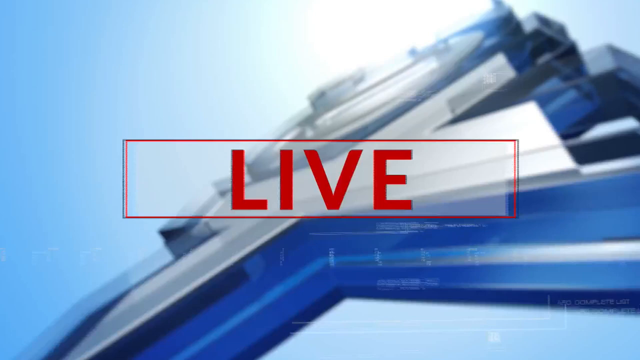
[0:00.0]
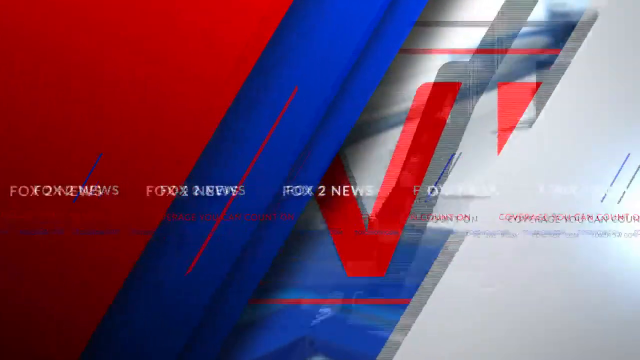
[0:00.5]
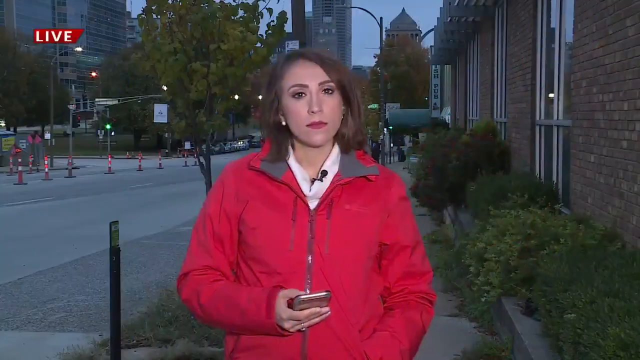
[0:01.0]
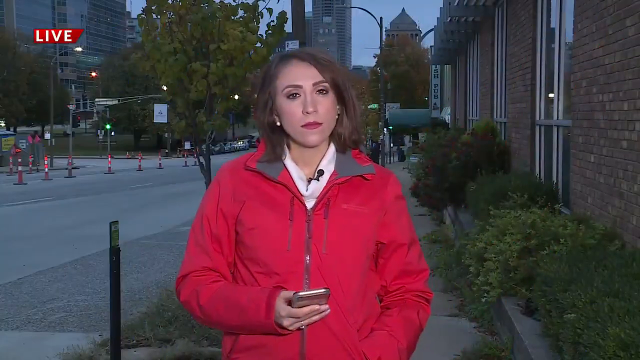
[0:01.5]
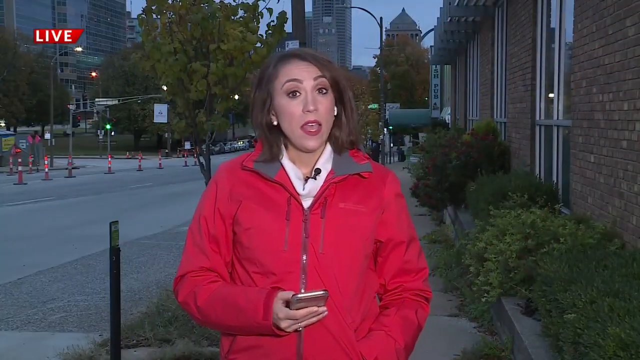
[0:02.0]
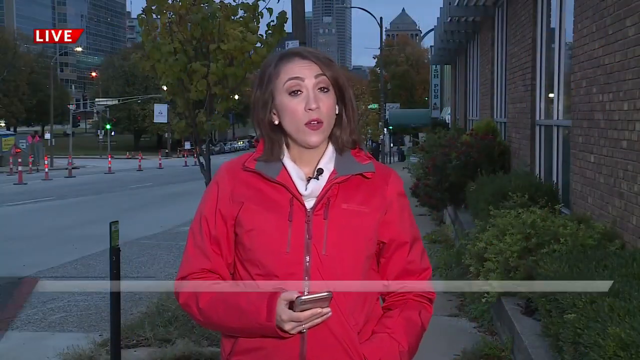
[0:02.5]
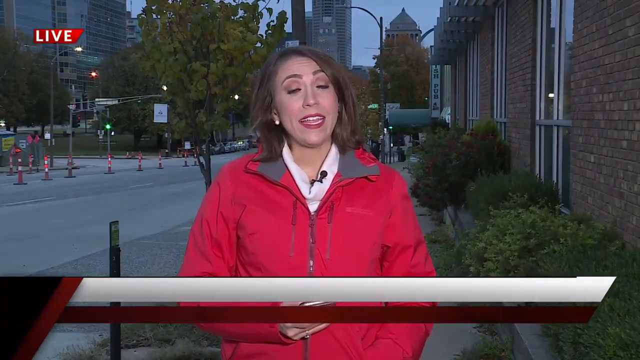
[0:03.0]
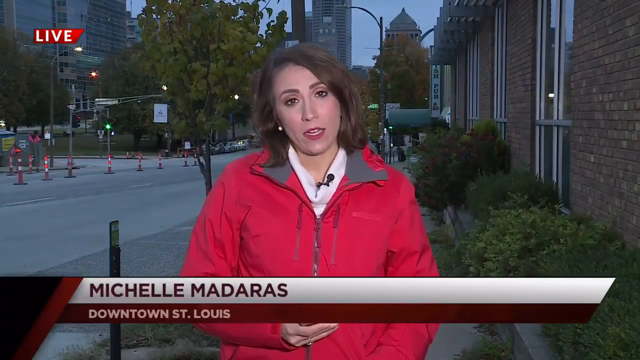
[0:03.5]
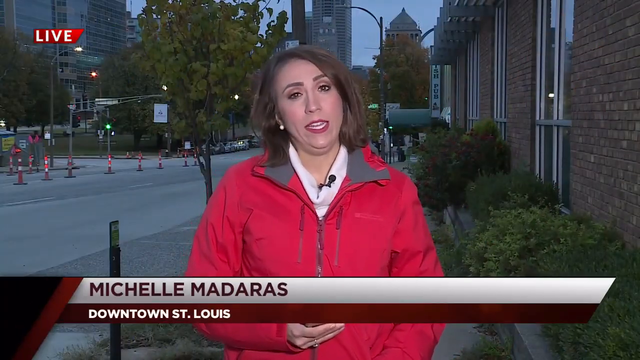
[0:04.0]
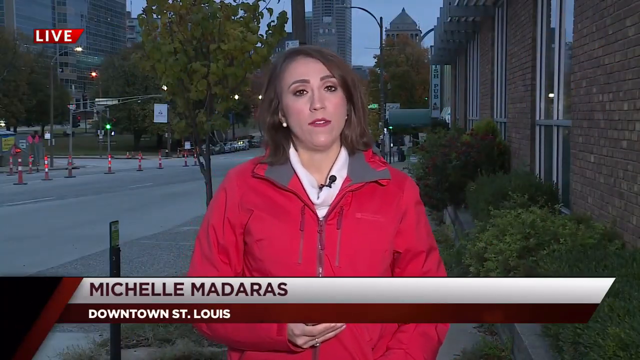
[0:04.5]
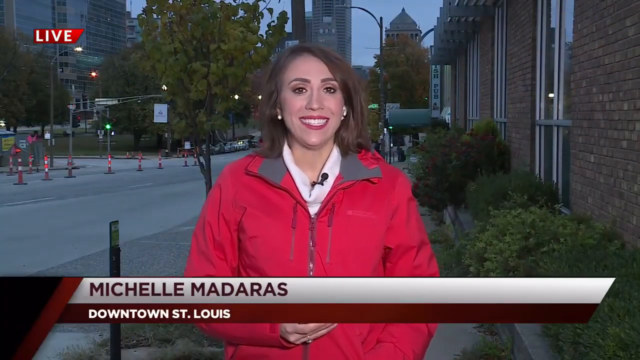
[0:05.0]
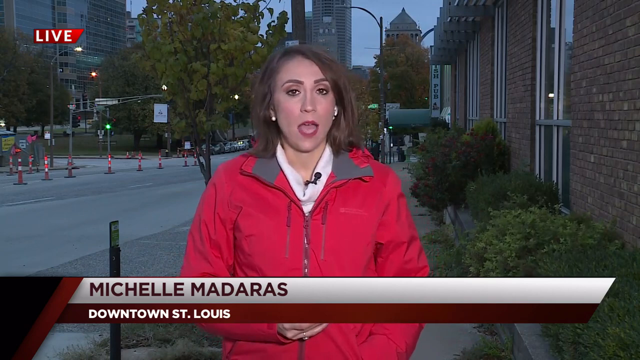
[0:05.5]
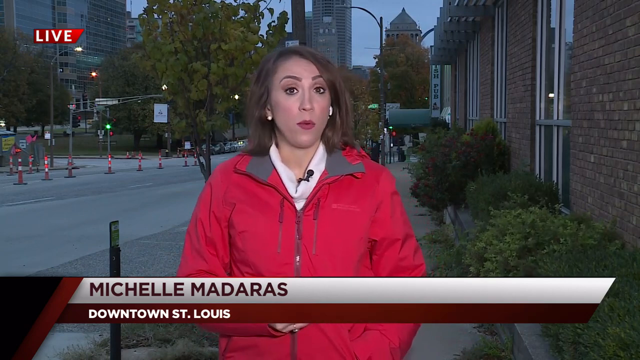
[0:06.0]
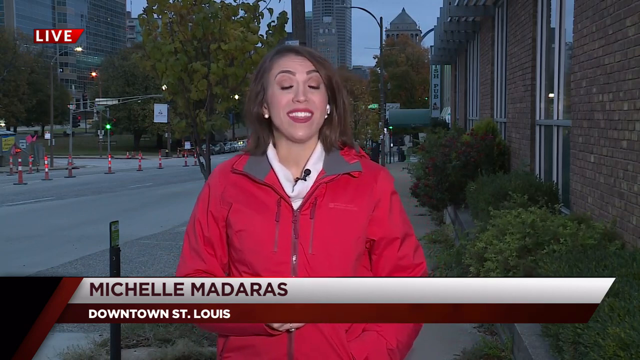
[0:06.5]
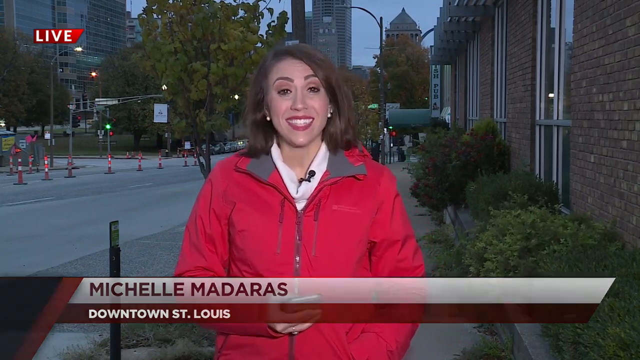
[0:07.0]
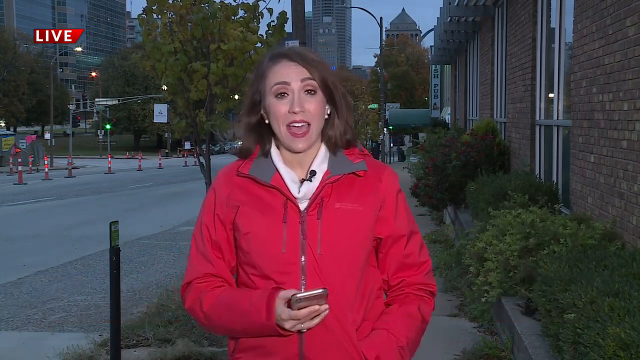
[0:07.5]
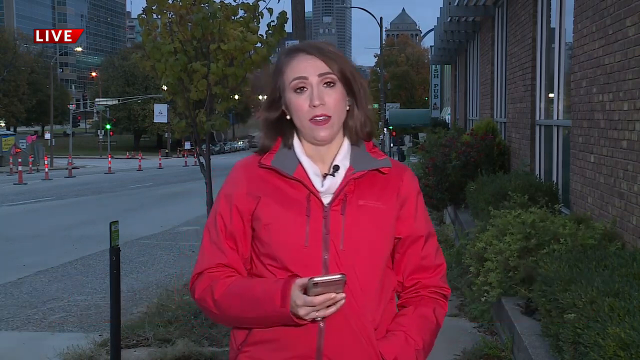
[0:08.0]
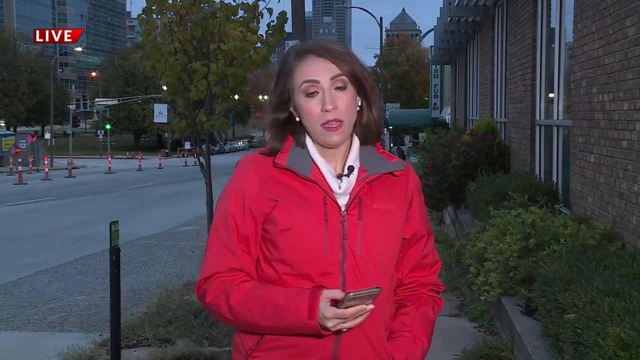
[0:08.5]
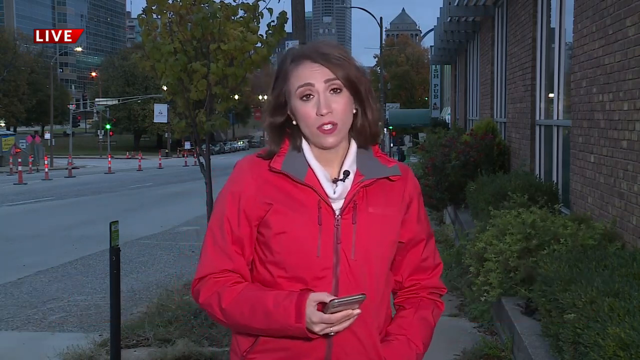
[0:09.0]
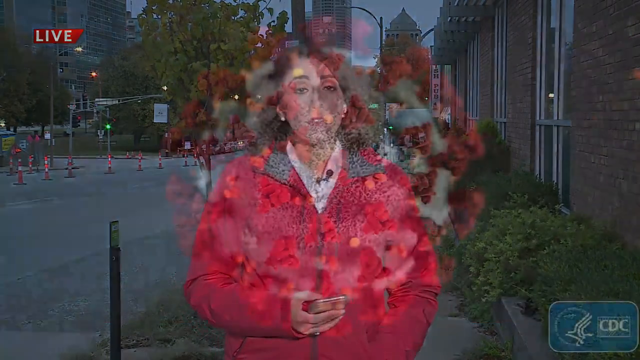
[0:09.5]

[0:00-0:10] The word "live" appears in bold at the start, suggesting a live broadcast. A woman then appears, seemingly standing outside a building, with a street beside her where people walk up and down behind her. She wears a black jersey, has a microphone clipped onto her white shirt, seems to be holding her phone in her right hand, and wears red lipstick. A caption below her reads "Michele Madaris", which seems to be her name, and below that a location is shown, possibly Queenstown or Gavin Street, Louis. She seems to be standing on a downtown street. What appears to be a coronavirus symbol then appears, with red on top that seems to represent bacteria on the virus.